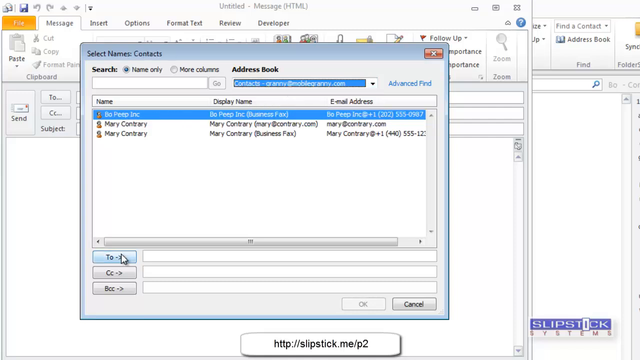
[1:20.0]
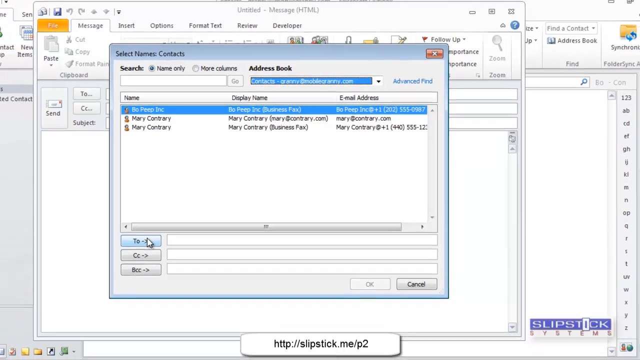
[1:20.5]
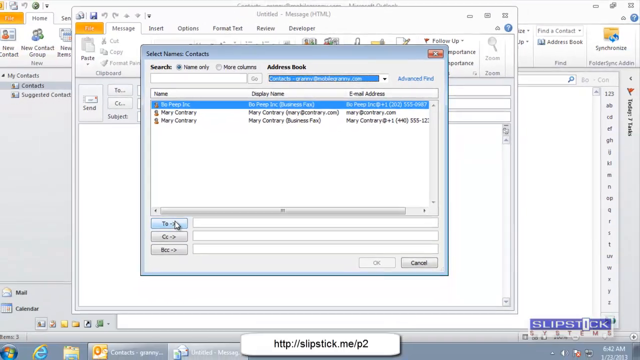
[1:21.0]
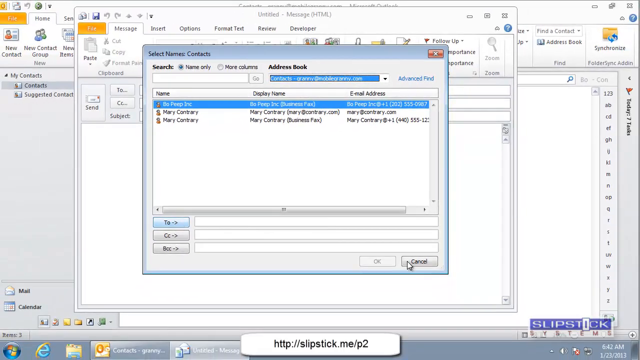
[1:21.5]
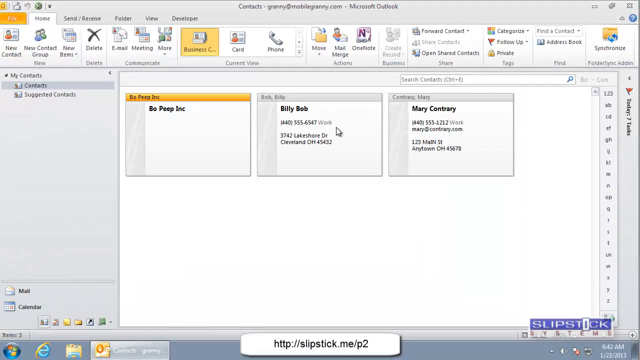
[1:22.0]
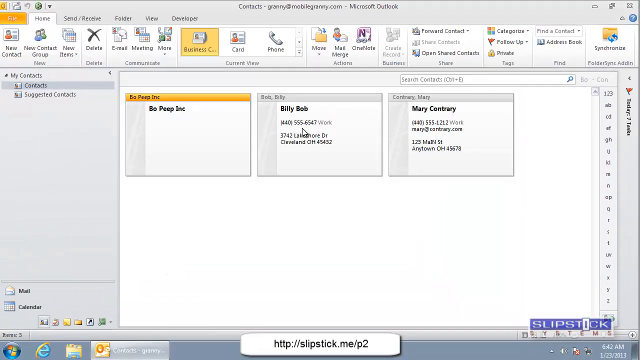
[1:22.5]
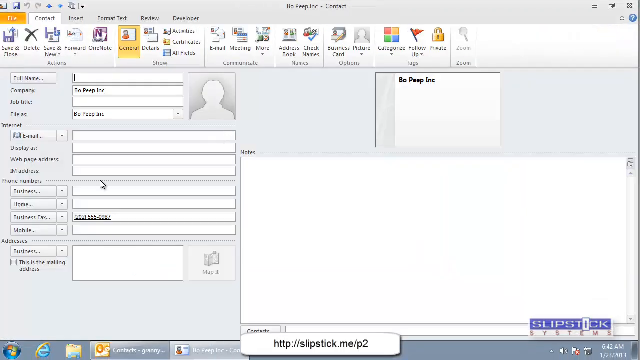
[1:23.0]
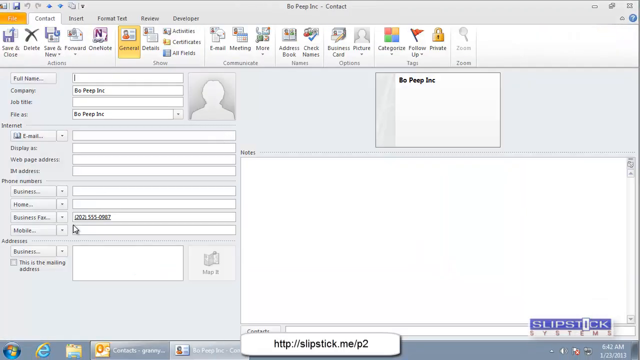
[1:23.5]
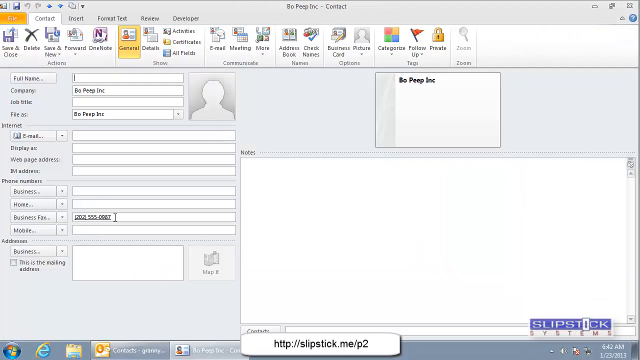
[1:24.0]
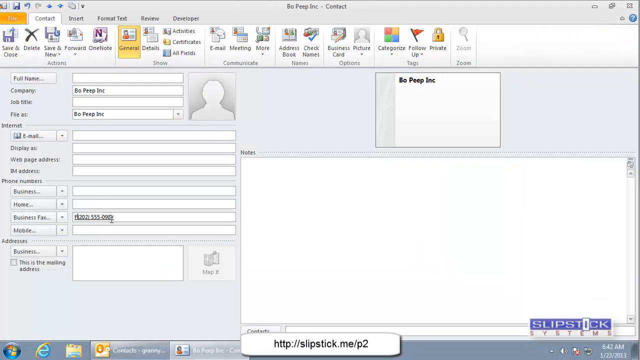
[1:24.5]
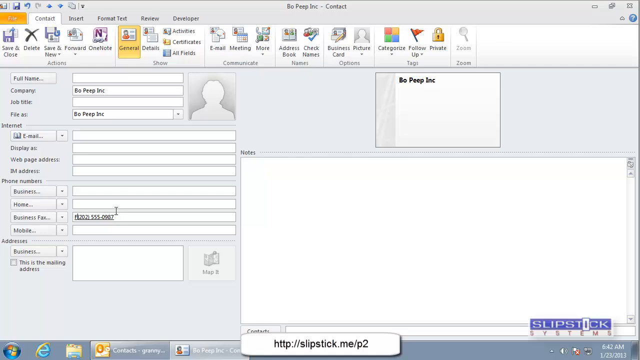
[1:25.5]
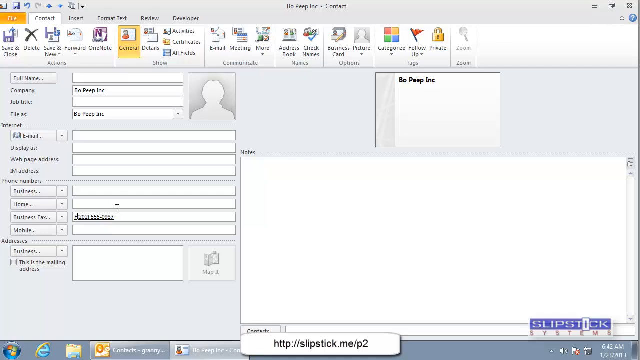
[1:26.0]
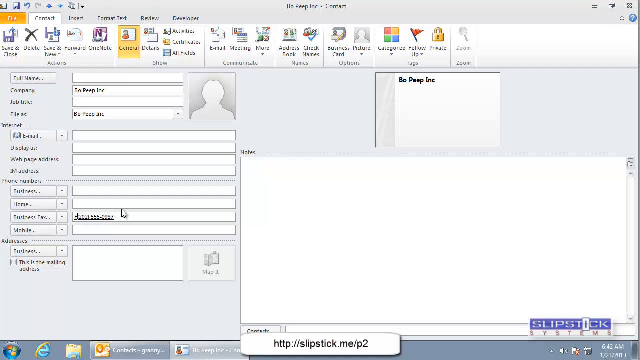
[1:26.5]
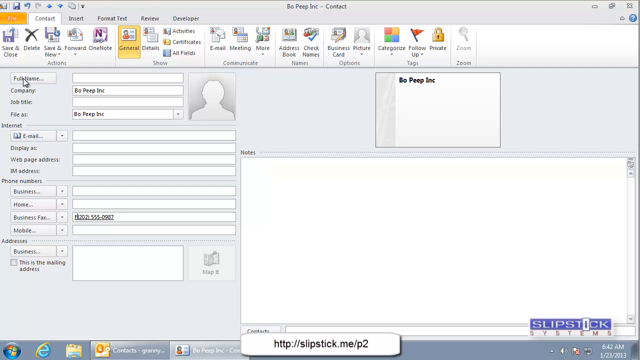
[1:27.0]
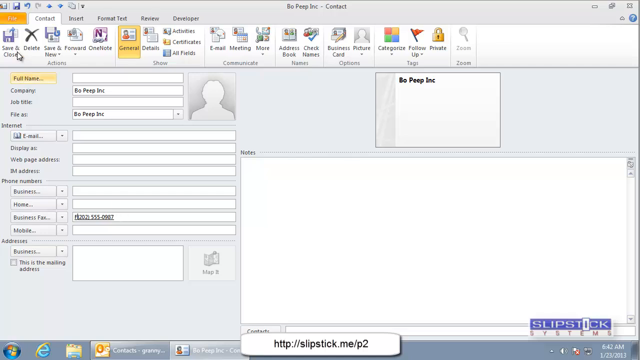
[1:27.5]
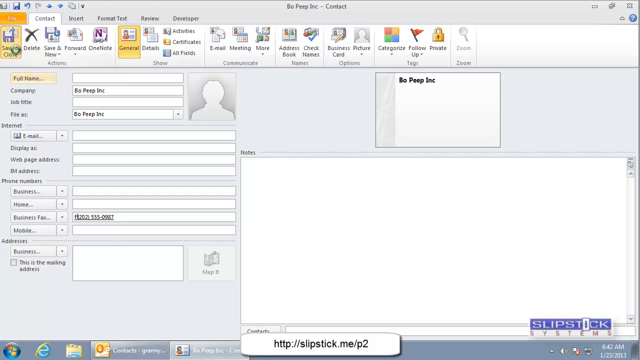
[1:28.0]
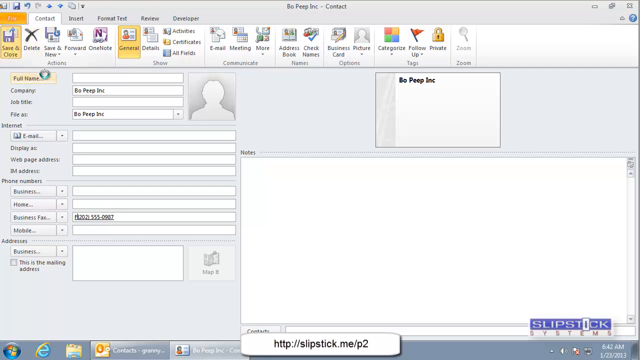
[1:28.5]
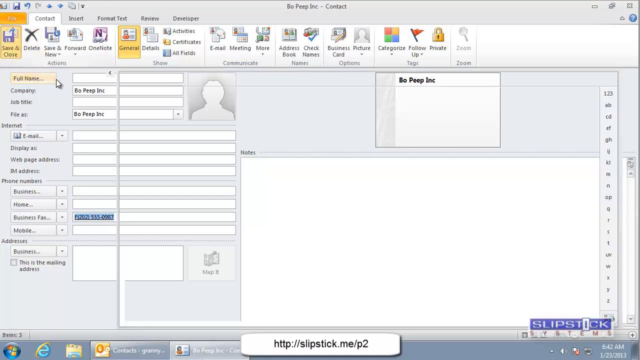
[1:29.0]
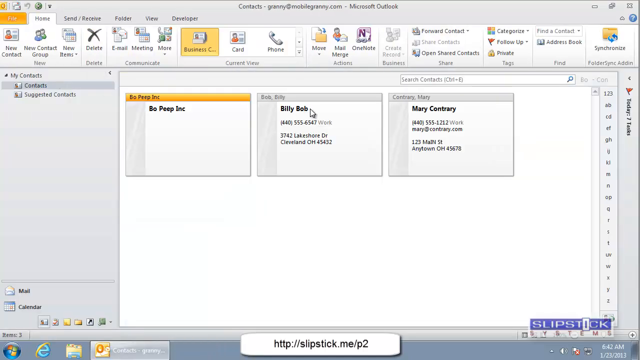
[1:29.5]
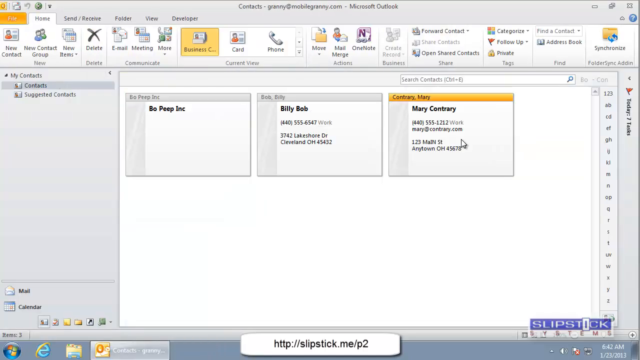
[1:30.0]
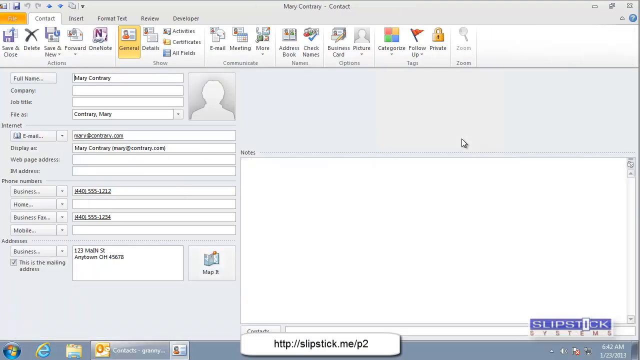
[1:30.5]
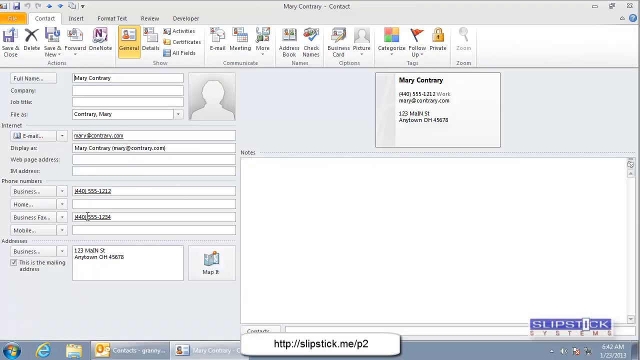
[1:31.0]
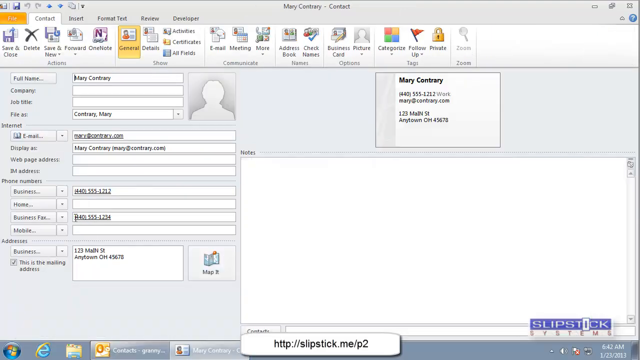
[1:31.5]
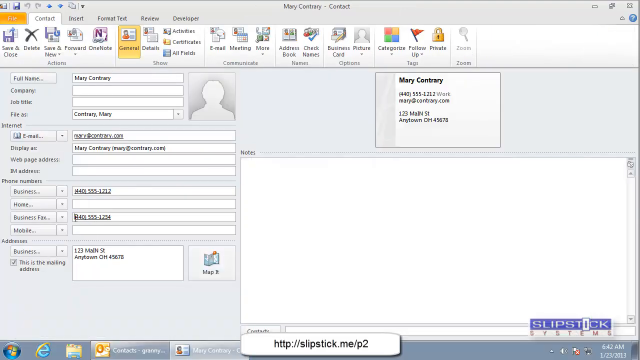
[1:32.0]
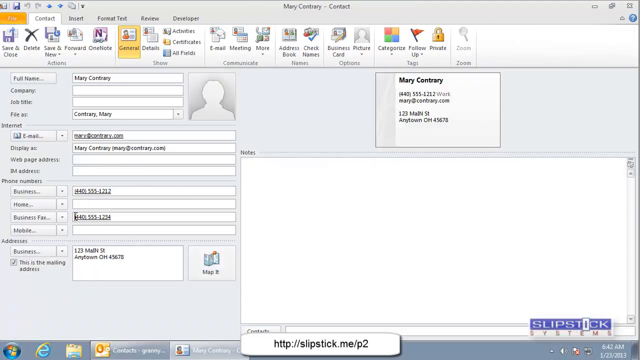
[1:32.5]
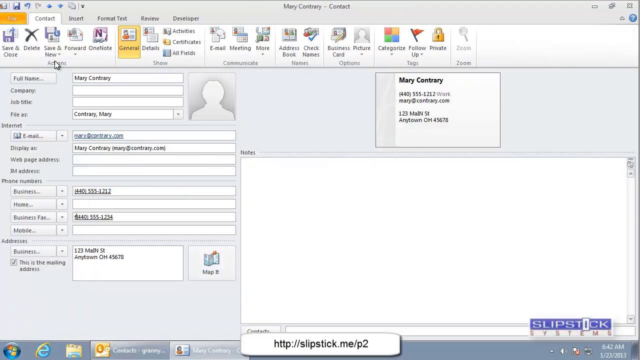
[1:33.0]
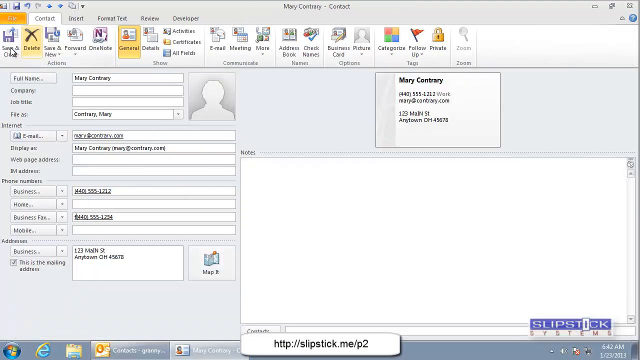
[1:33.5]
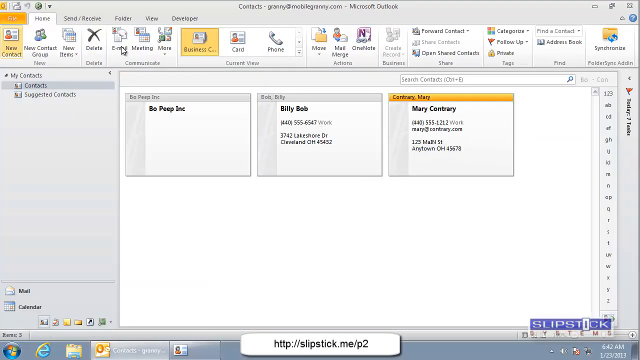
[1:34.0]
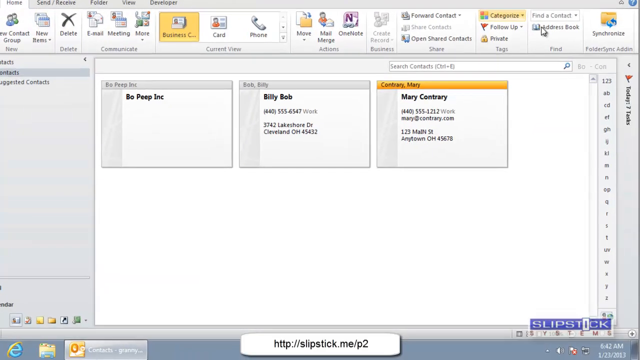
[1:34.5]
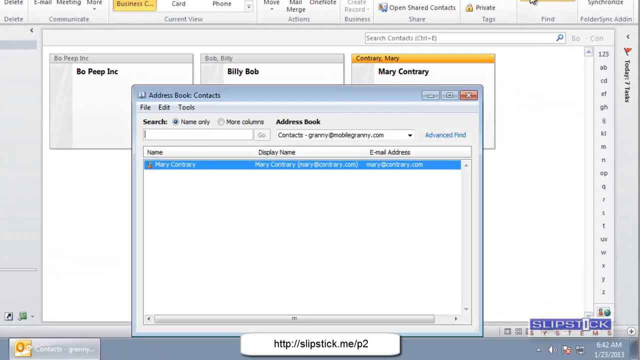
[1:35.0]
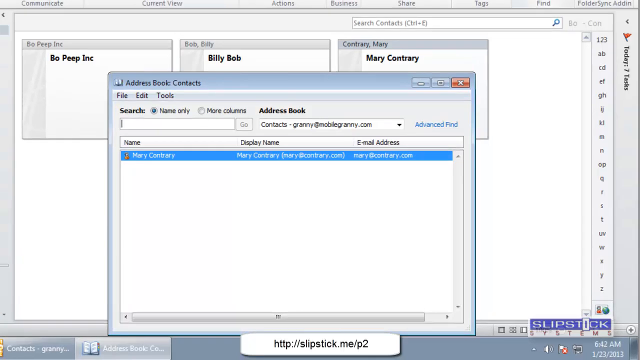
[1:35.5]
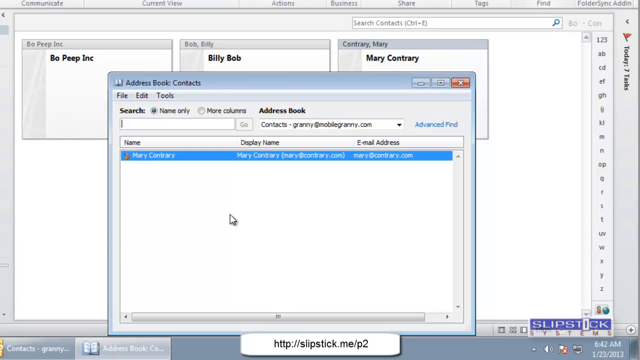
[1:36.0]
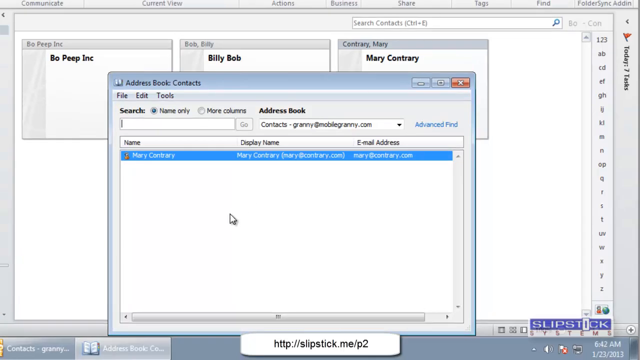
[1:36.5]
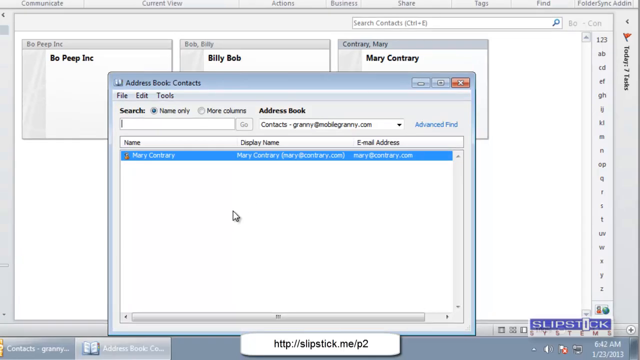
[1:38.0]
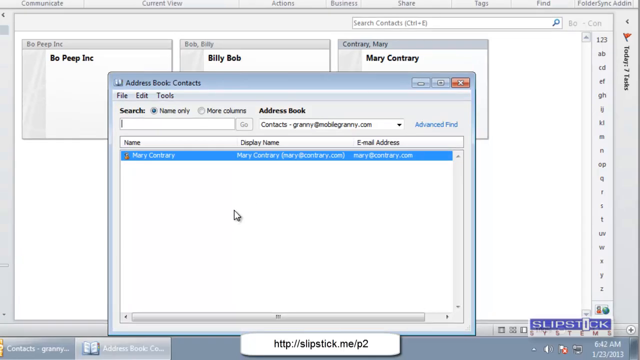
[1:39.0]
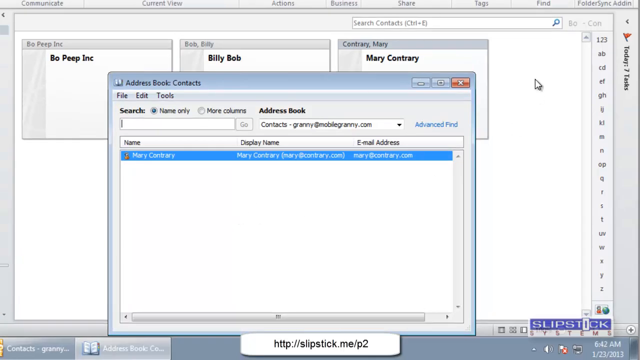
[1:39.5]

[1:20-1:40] The person is still looking at the Select Names section under Contacts and going through the address book. They close it and arrive at a section for entering more information about a contact, with blanks for personal or detailed information. There are fields for full name; company name, which is already filled out as Bo Peep Inc.; job title, which is blank; and file as, filled out as Bo Peep Inc. Under Internet are email, display as, web page address and IM address. Phone number fields include business, home, business fax (which is filled out) and mobile, and there are addresses with business underneath. The user appears to save this and go to the Mary Contrary entry under their contacts, which seems to have similar information filled out as the Bo Peep Inc. entry, with no apparent difference in the listed information.